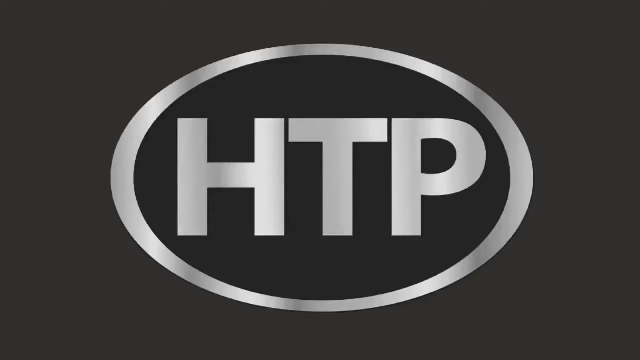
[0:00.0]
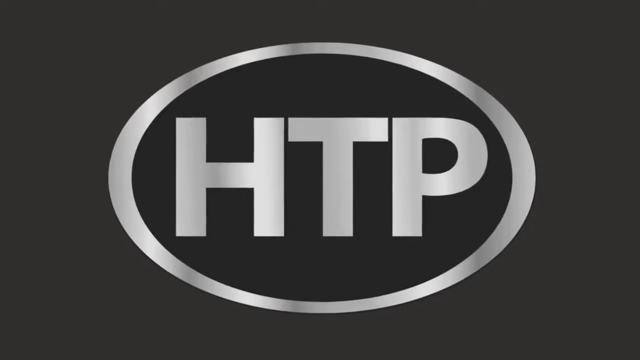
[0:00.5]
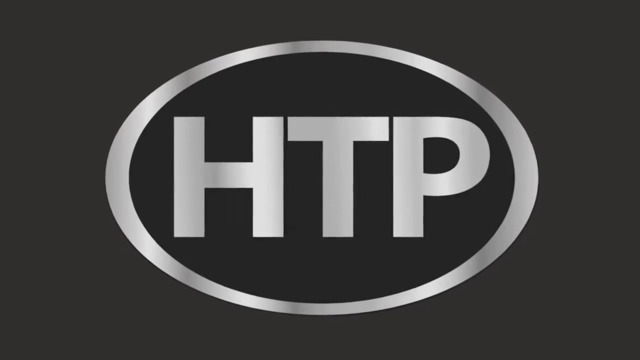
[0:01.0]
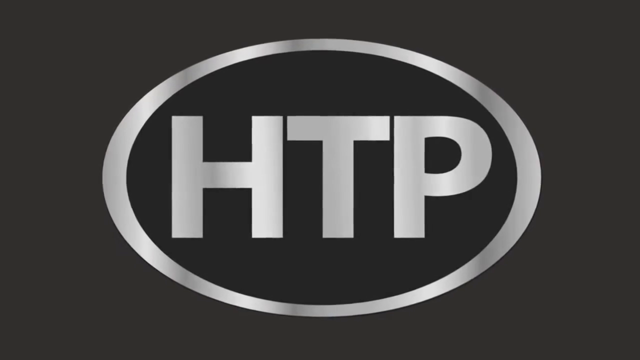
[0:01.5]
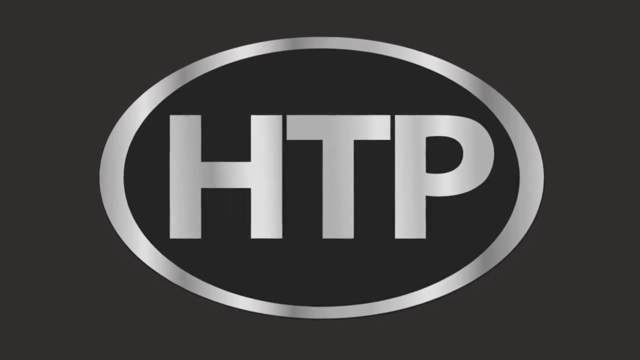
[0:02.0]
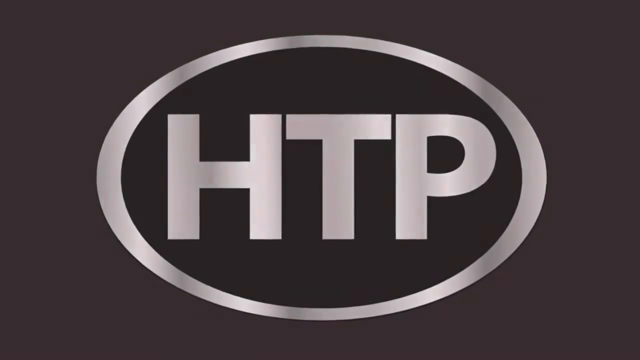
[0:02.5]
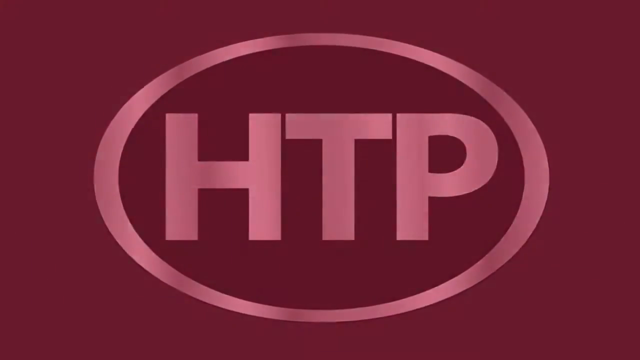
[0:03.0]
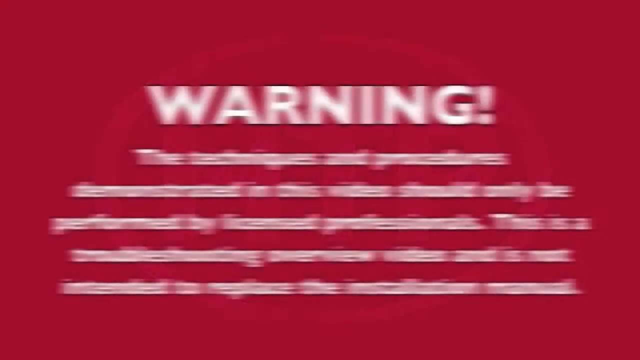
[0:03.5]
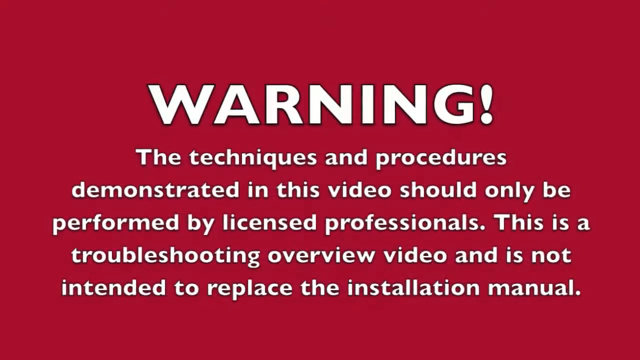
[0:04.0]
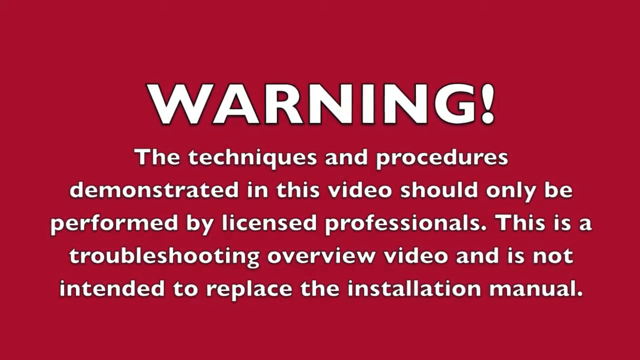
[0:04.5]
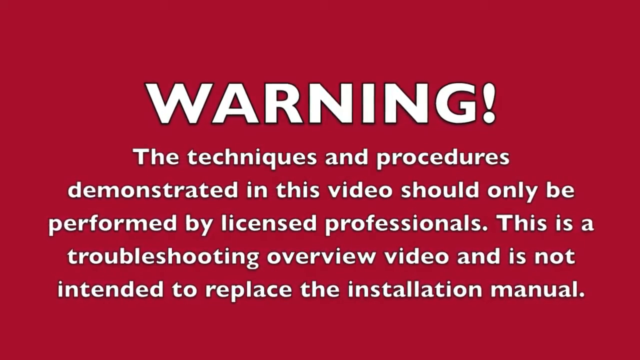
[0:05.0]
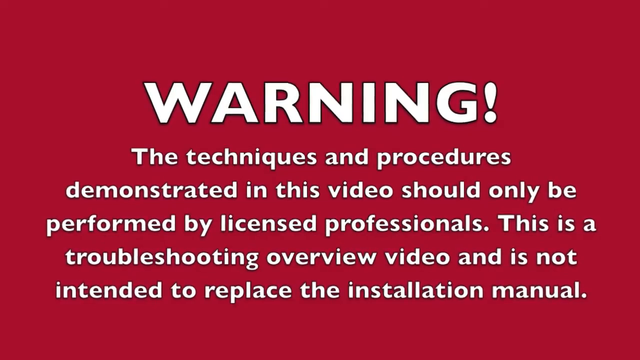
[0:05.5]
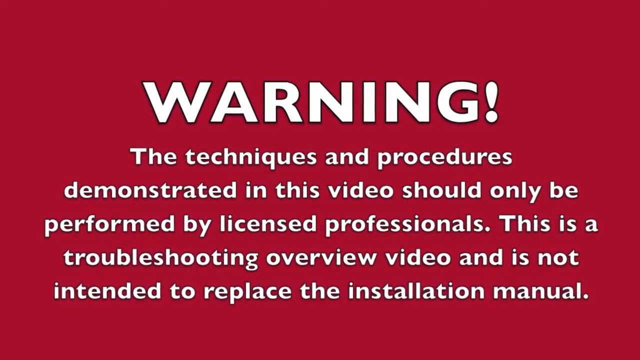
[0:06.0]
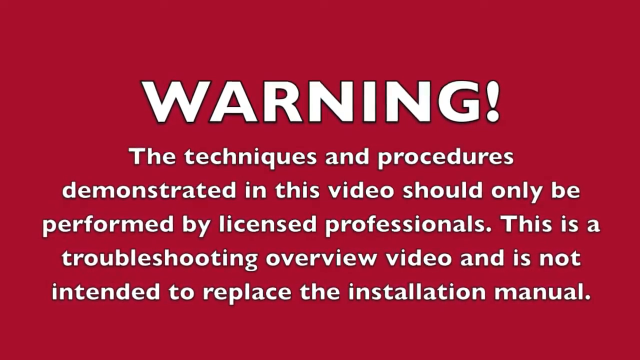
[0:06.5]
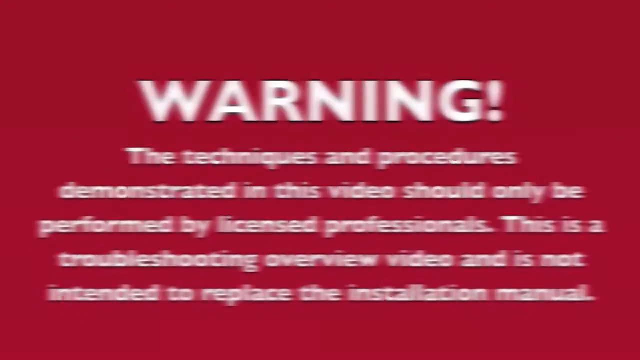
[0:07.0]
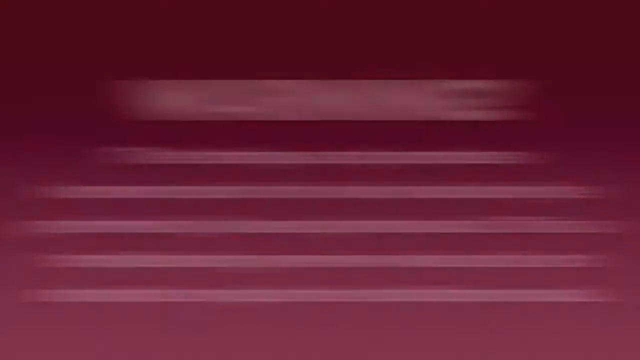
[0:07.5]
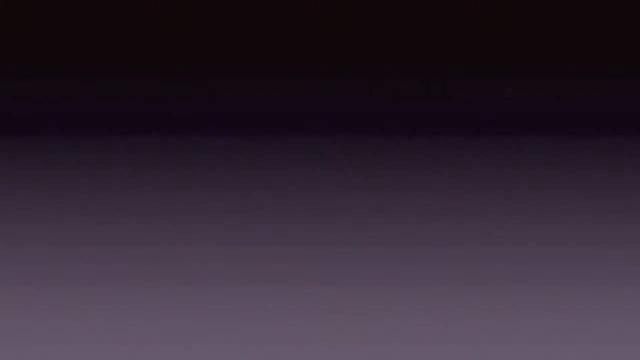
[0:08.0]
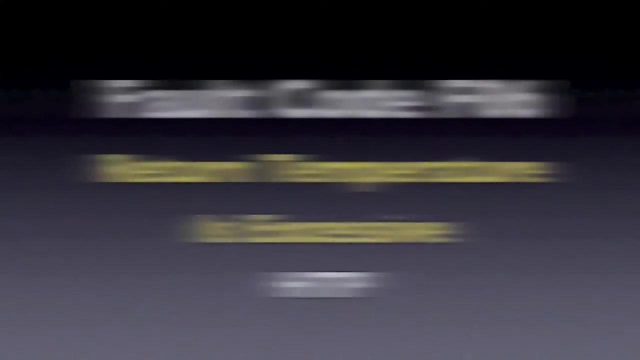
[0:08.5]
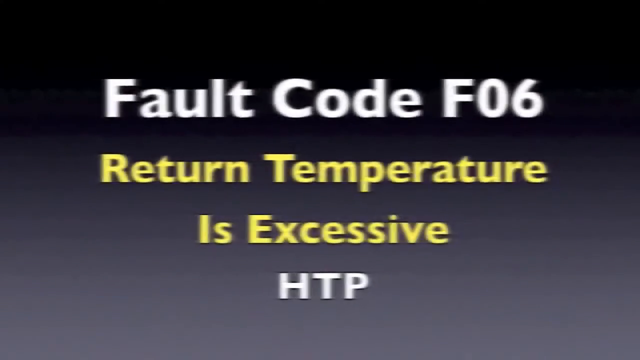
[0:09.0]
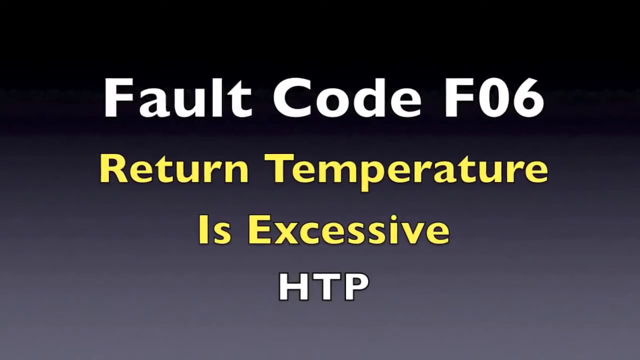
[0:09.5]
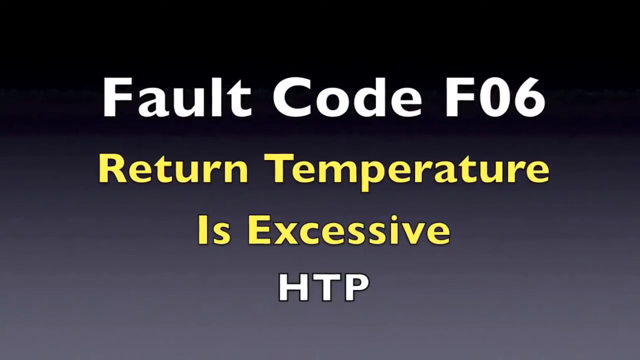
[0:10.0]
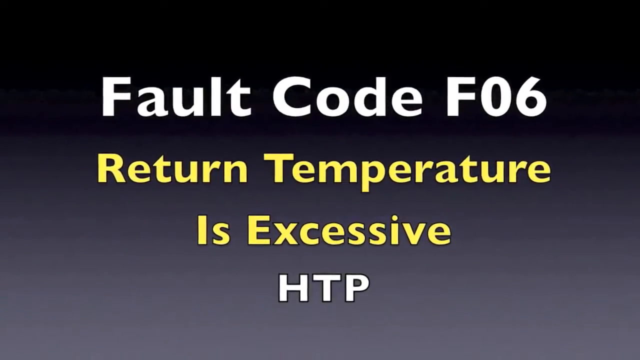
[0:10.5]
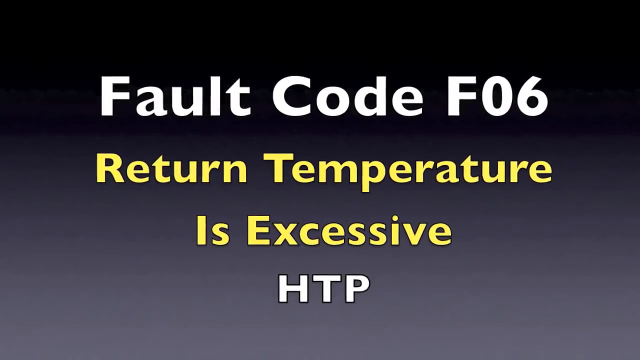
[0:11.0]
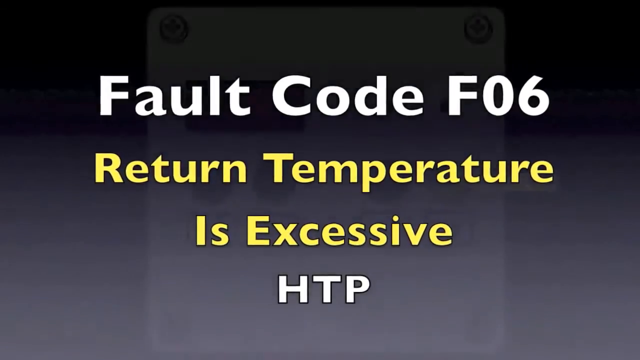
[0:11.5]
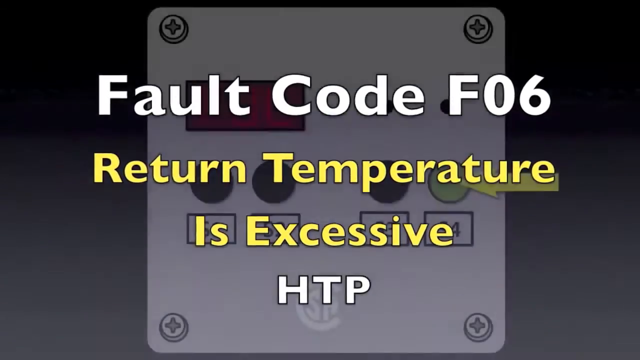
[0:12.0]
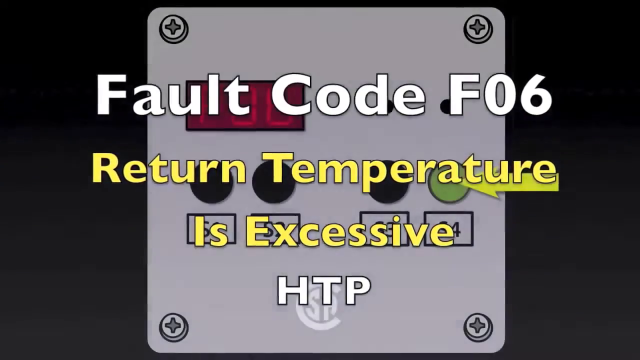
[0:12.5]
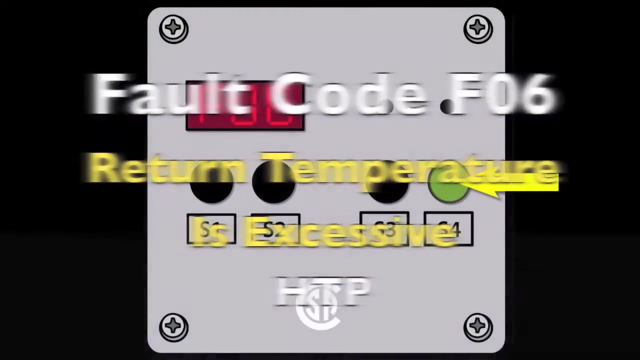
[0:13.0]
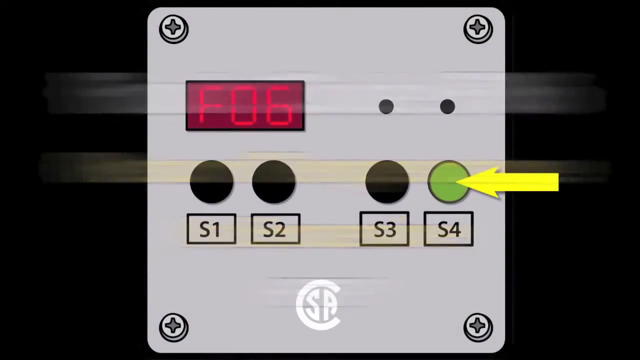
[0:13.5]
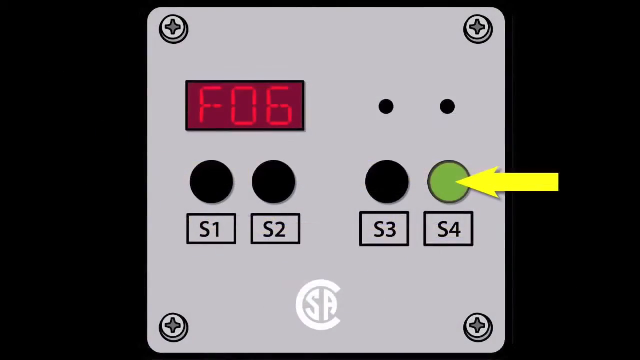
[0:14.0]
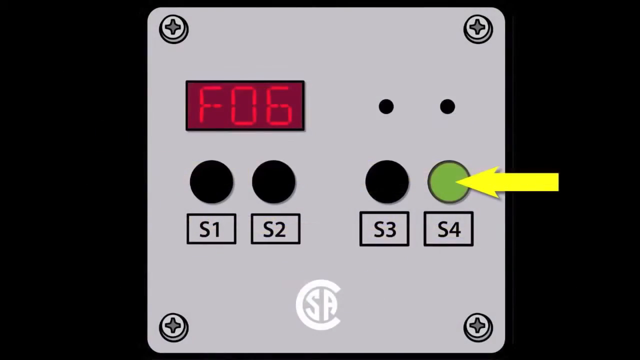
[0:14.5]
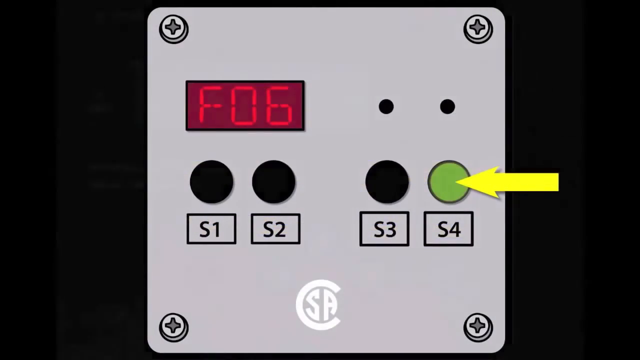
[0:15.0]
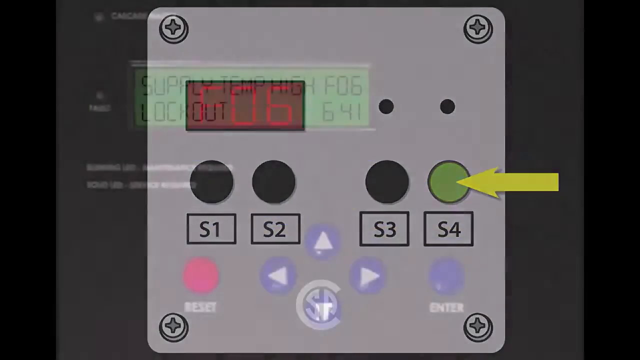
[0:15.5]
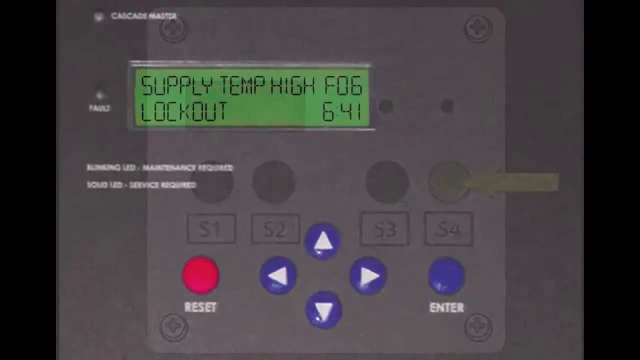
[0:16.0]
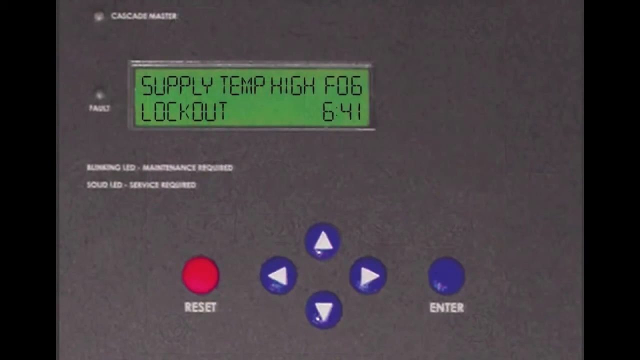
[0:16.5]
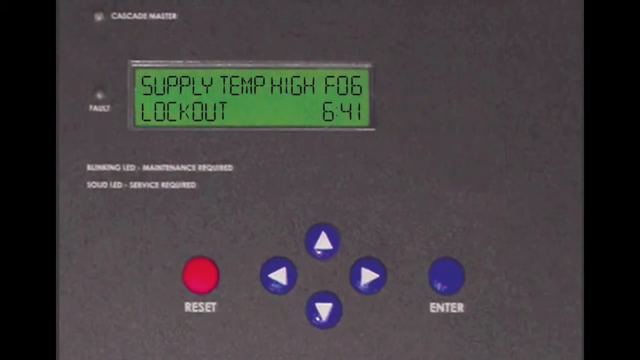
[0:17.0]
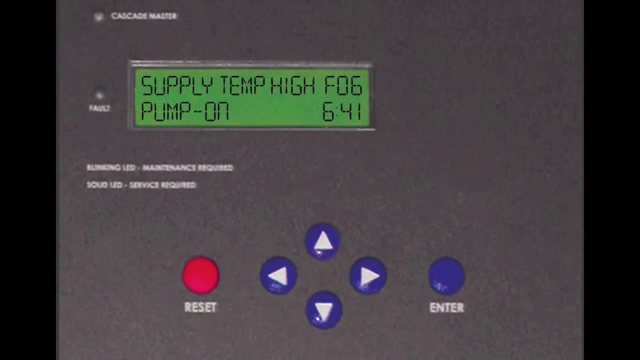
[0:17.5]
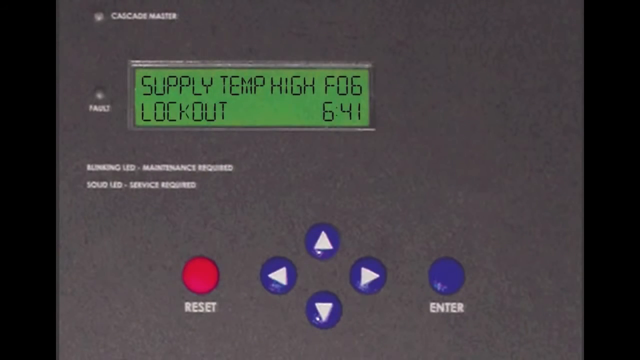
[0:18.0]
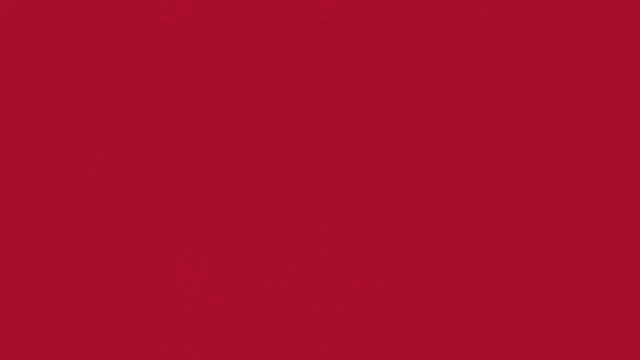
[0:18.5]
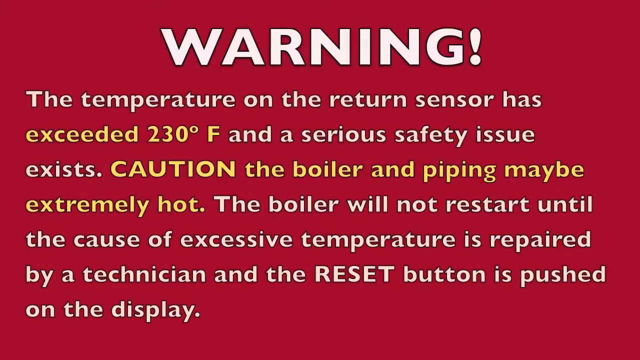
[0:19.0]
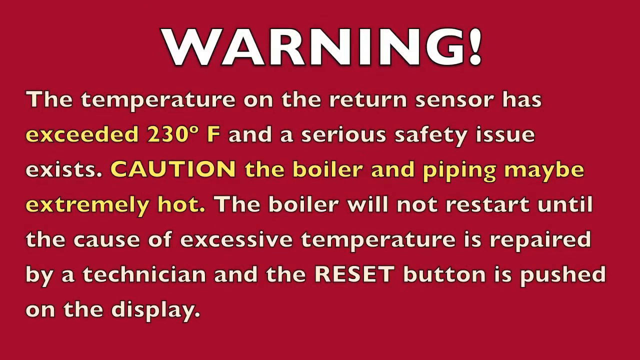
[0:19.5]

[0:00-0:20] The video opens on a black background with a silver circle in the middle that has "HTP" in the center. The view slowly zooms in before the screen turns to a red background with white text reading "warning the techniques and procedures demonstrated in this video should only be performed by licensed professionals. This is a troubleshooting overview video and is not intended to replace the installation manual." This also slowly zooms in, and then the screen changes to a kind of black gradient, darker at the top and very bottom with some lightness between those two sections. In white it reads "fault code F06", then in yellow "return temperature is excessive", then in white again "HTP". The text stays on screen as the background changes and then fades off. The new screen has a gray rectangle in the center with black on either side, what looks like two screws in both upper corners, and a red rectangle that says "F06". Below that are four buttons in groups of two: three are black and the last one on the right is green, with a yellow arrow pointing to it. Under the buttons are the labels "S1", "S2", "S3" and "S4". This fades out and another display on a gray machine appears; the display is green and says "supply temp high F06 pump on 641". Below it, from left to right, are a red reset button, four blue buttons with white arrows, and another blue button with "enter". Then another warning screen with a red background and white text appears.